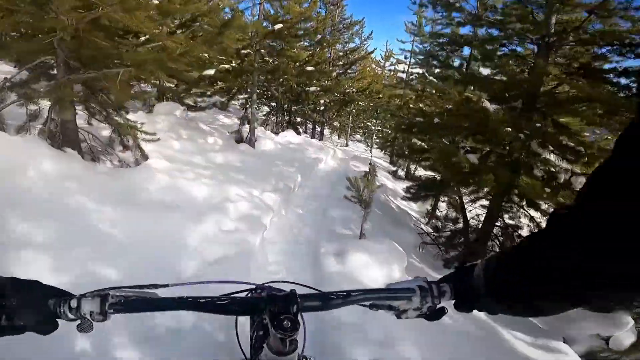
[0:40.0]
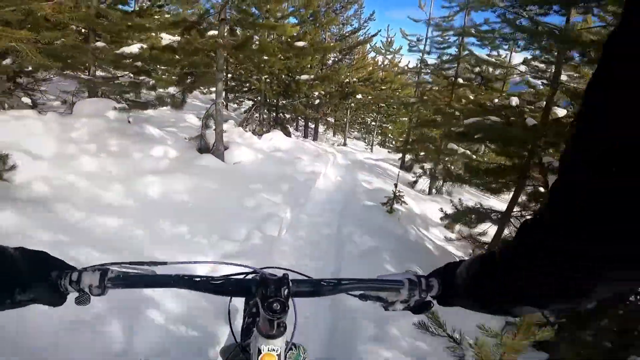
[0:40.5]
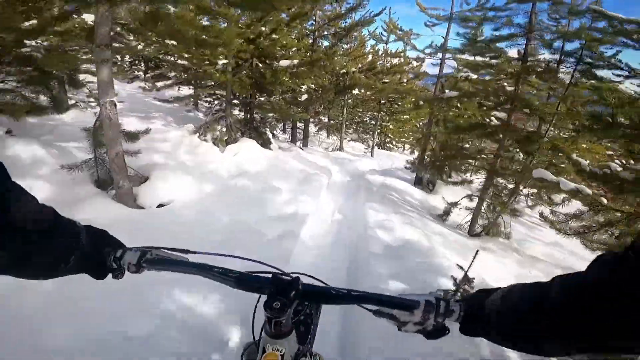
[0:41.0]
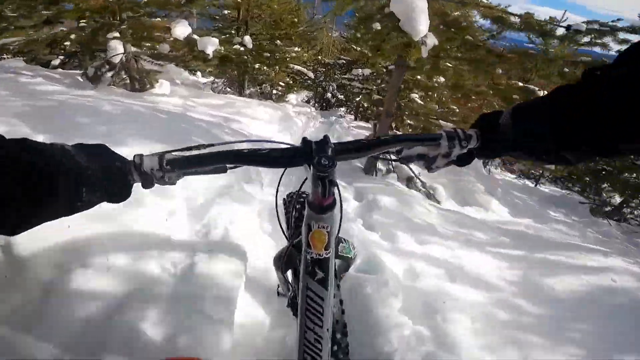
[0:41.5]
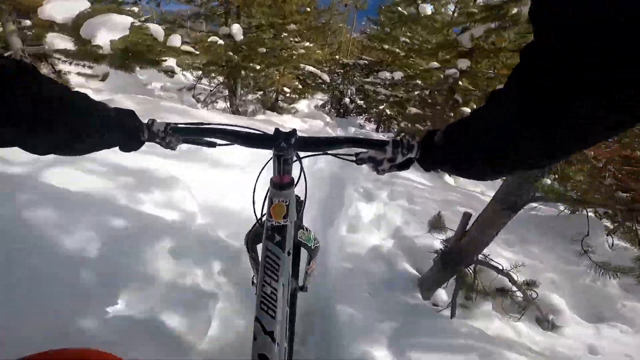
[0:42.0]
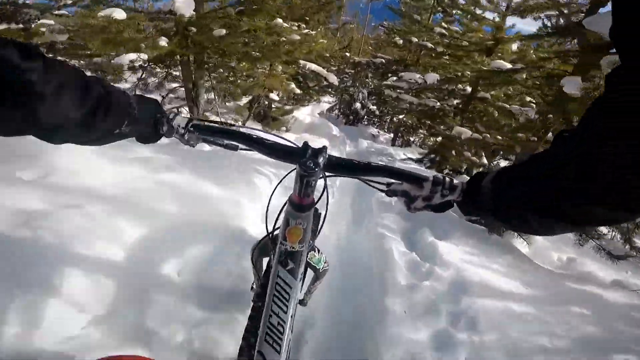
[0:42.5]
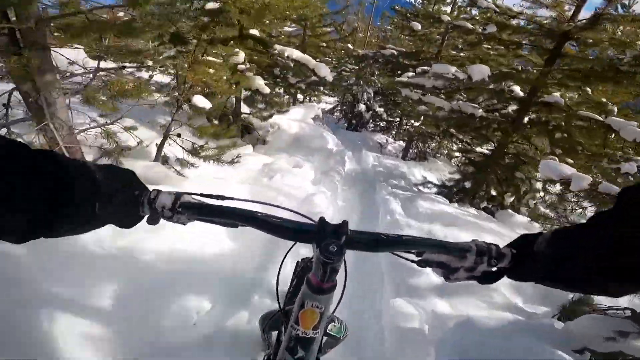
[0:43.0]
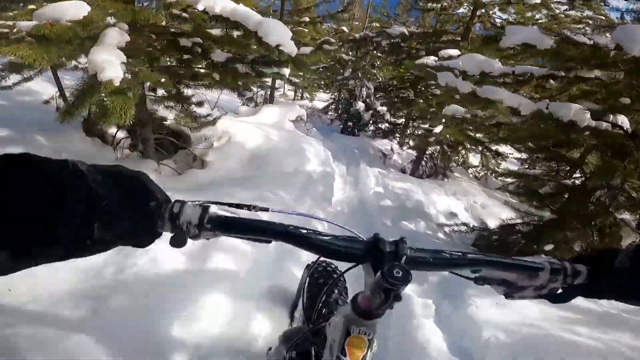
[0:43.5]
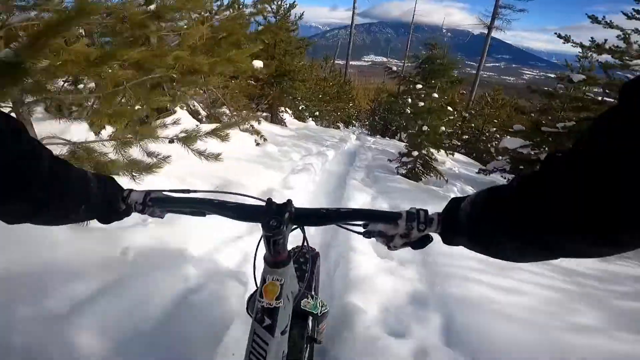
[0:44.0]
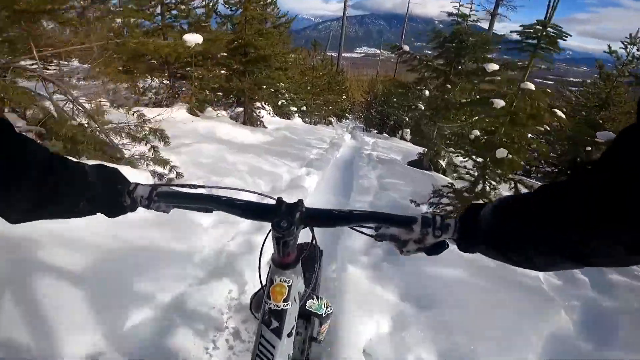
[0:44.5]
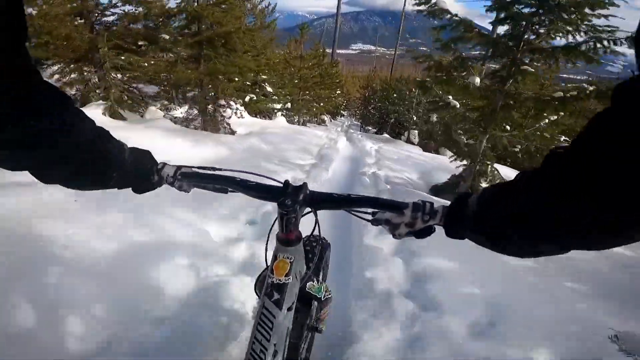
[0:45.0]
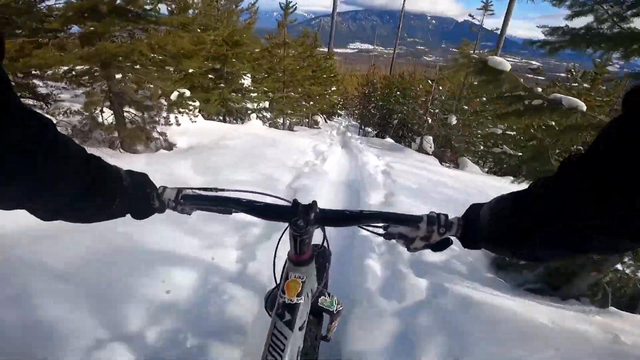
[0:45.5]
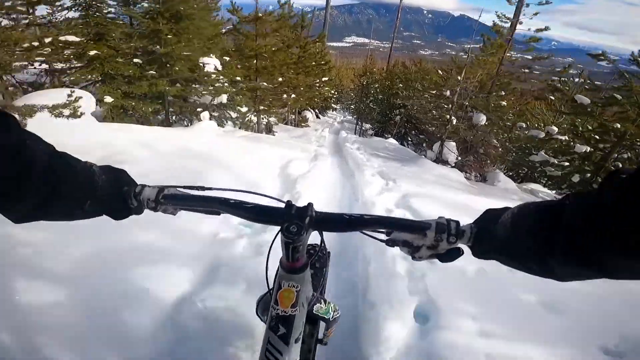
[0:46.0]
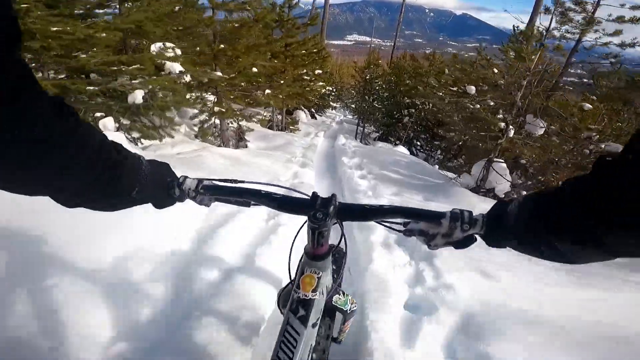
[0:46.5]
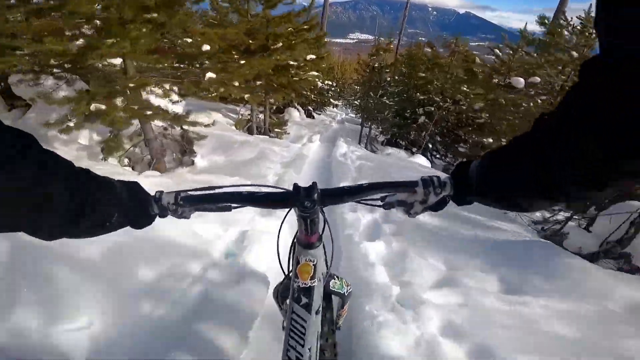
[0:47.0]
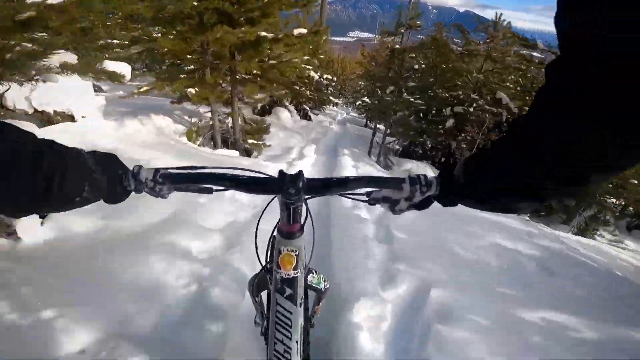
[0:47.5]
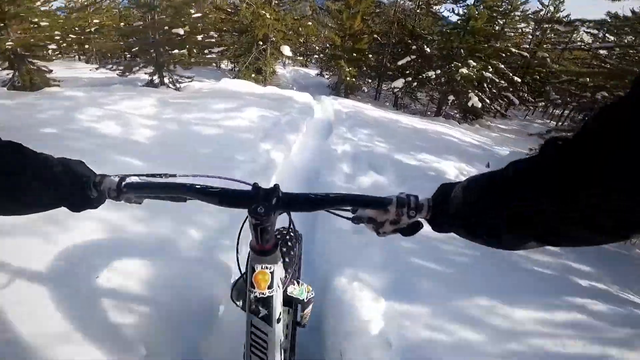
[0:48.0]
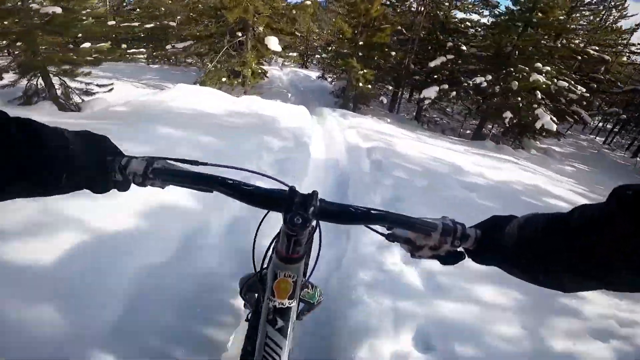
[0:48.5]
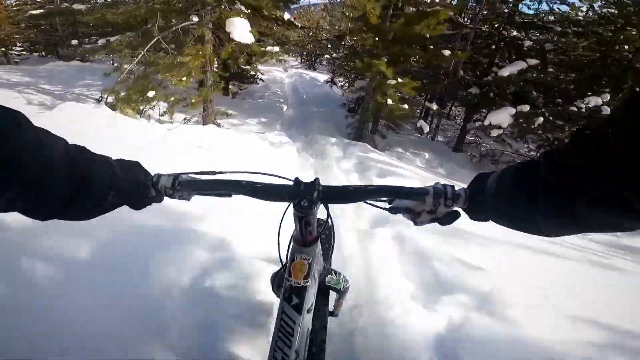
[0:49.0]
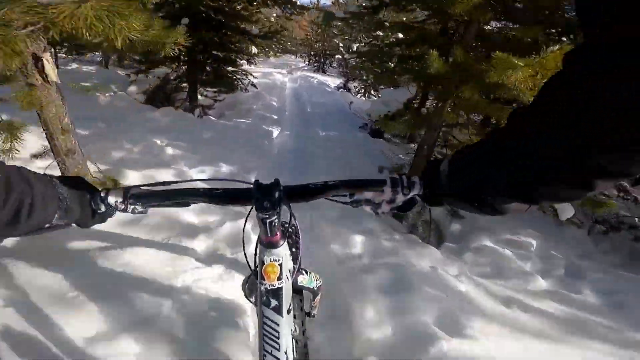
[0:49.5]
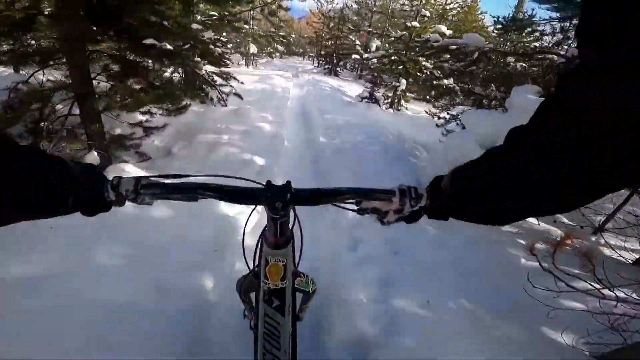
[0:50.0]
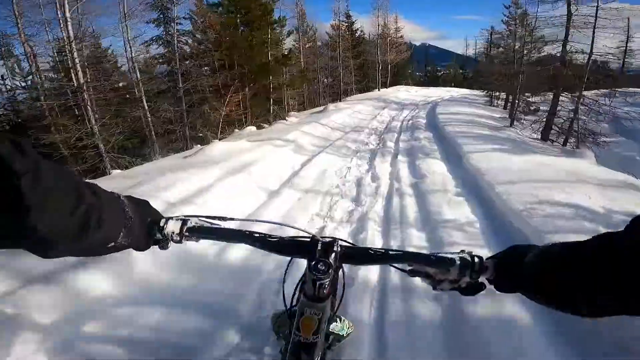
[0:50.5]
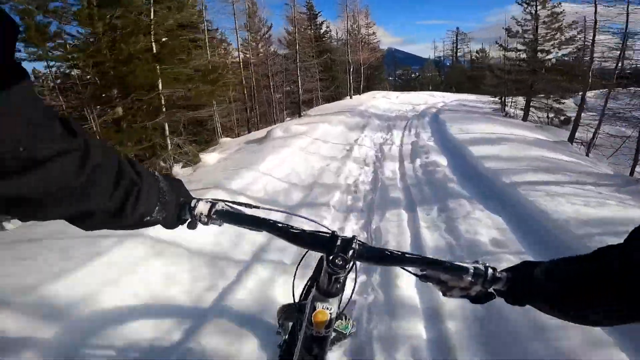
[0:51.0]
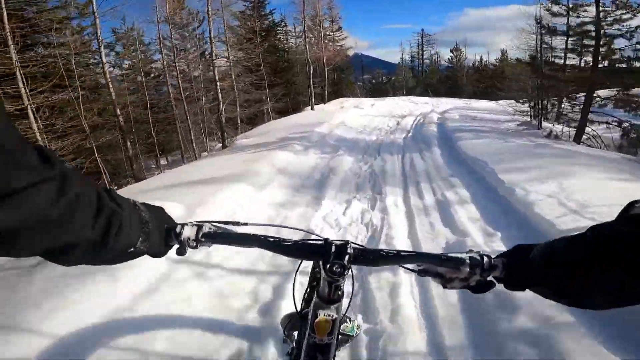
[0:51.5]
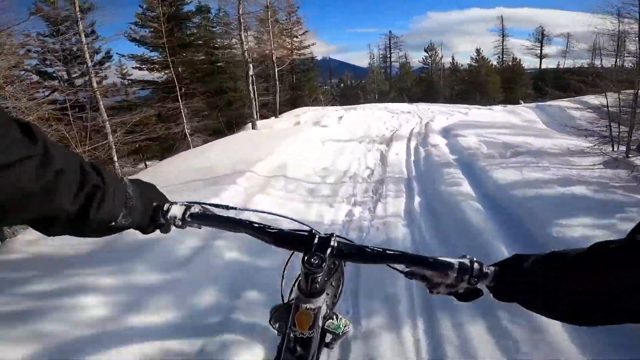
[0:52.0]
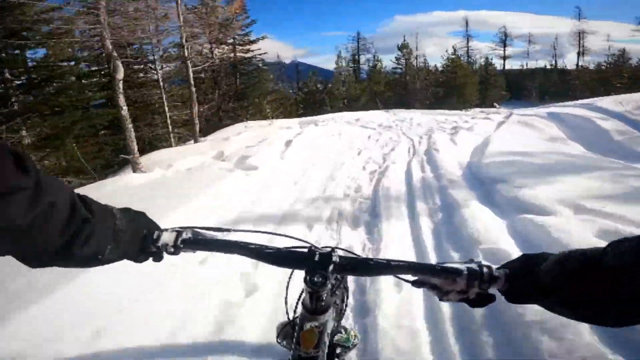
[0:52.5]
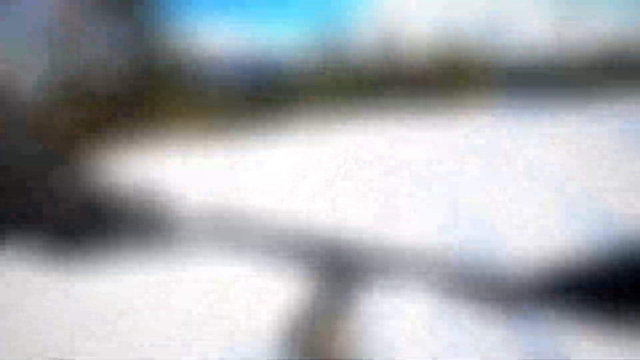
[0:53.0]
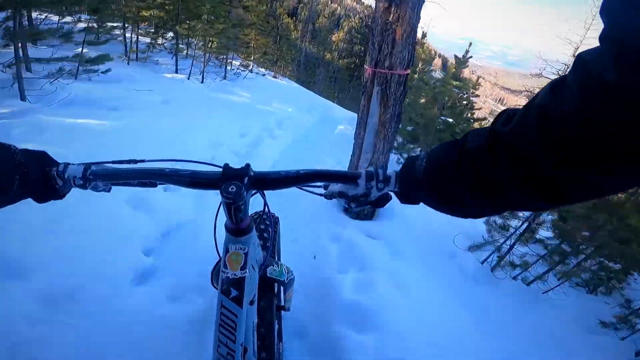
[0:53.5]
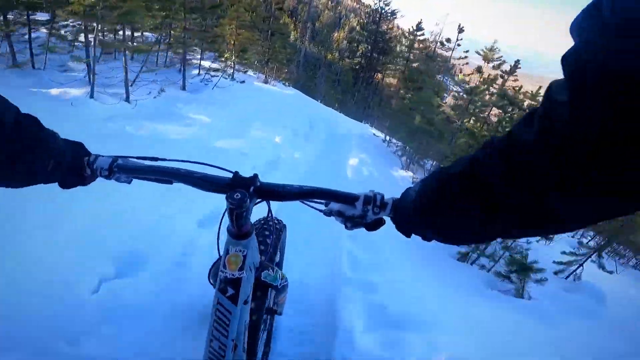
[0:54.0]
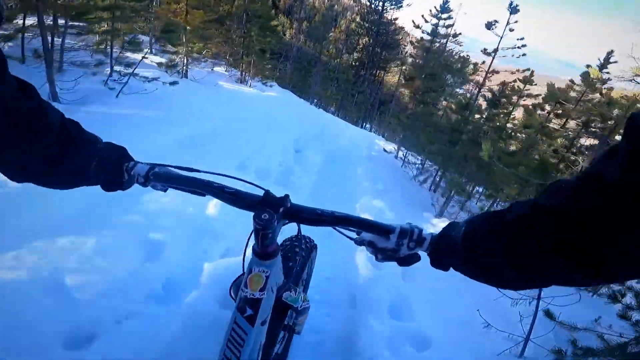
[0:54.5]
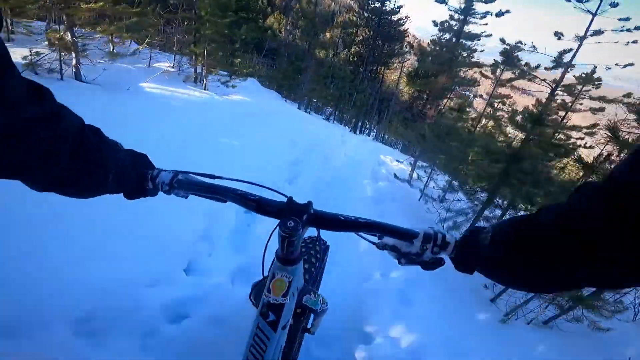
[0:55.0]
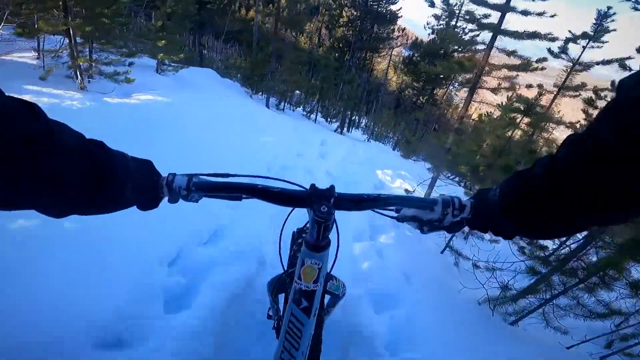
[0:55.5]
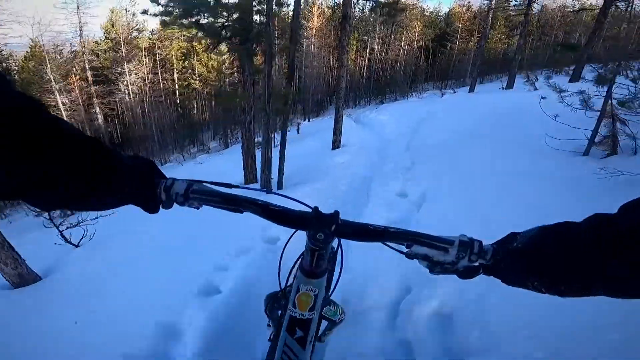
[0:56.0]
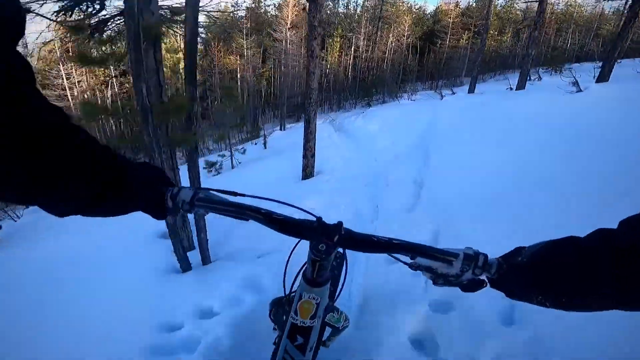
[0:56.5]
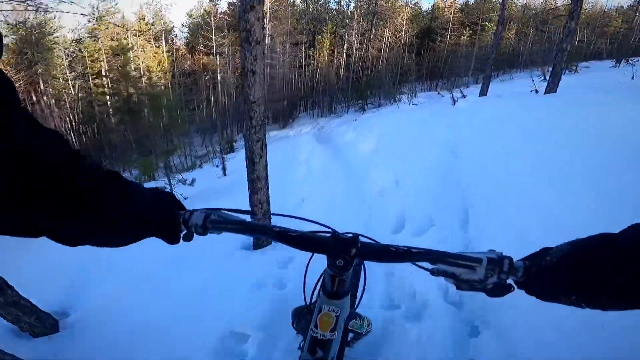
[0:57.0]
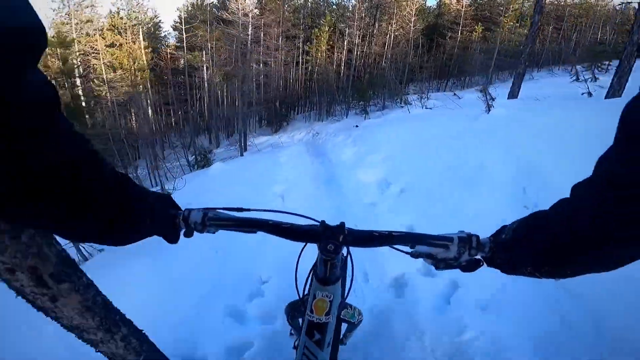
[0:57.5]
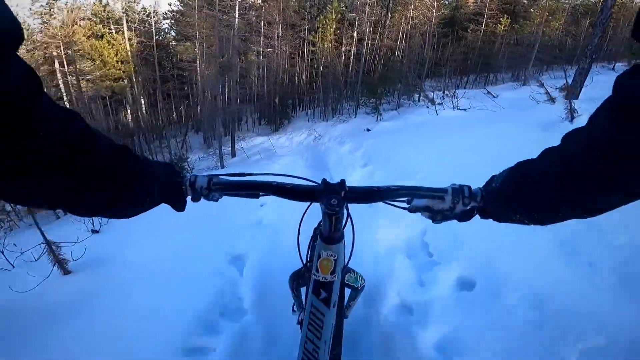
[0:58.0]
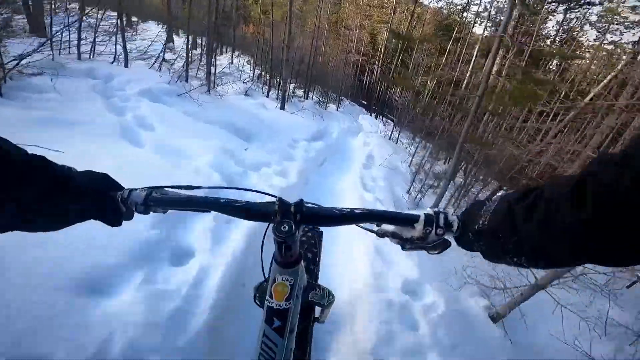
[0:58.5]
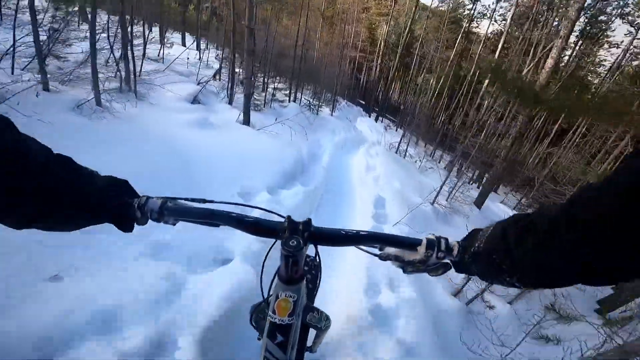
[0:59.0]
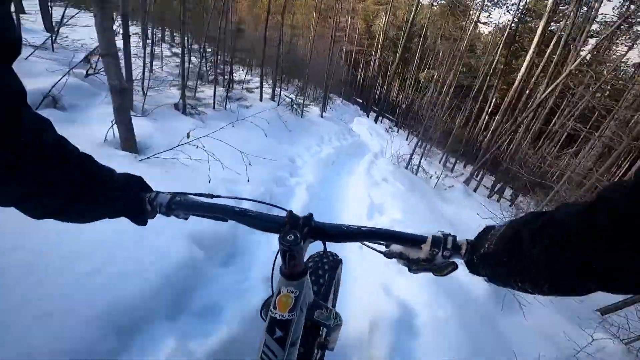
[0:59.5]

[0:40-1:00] The rider goes downhill and gains some speed among really tall trees, really short trees and evergreens with pine needles. He reaches an open area, a wider swath of land somewhat like a ski slope. That shot fades out into a new one that is shadier under the trees, where he is apparently still going downhill among many skinny, tall trees. The shots keep changing, and he is not going fast. Tracks in the snow show where other bikes have been. The camera movement is a little wobbly as he goes over bumps and small hills. It is probably the middle of the day, sunny, with the sun shining. There is snow on some of the tree needles, so it looks like it probably snowed recently.